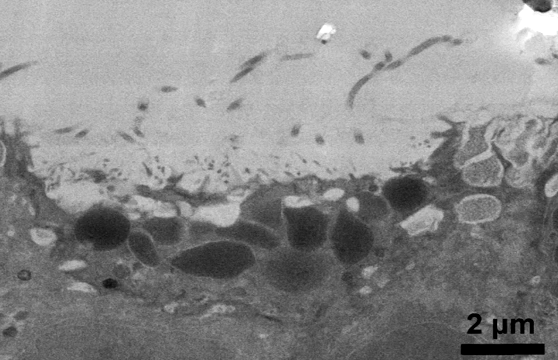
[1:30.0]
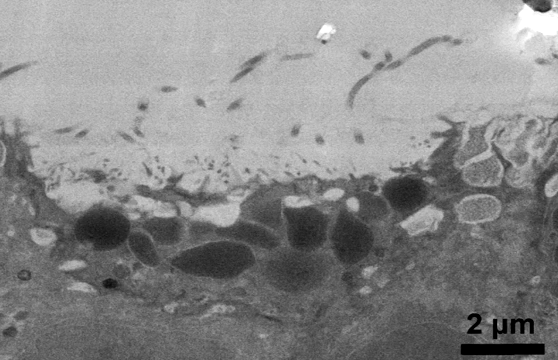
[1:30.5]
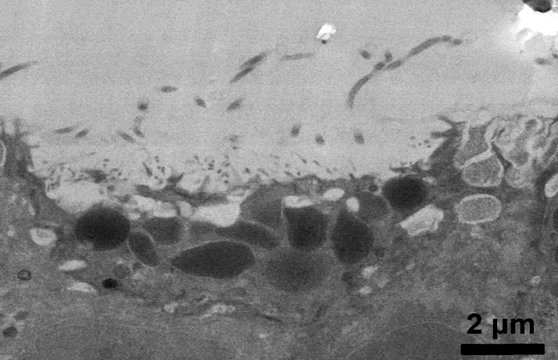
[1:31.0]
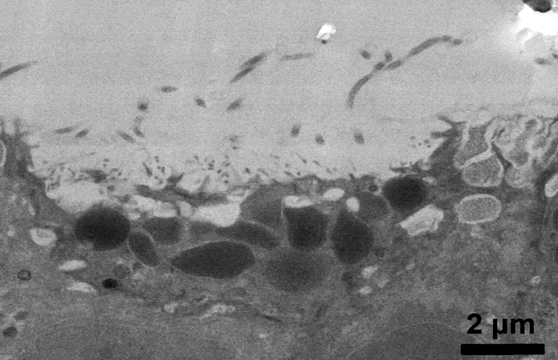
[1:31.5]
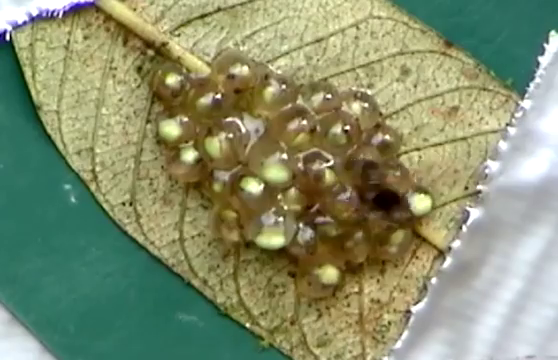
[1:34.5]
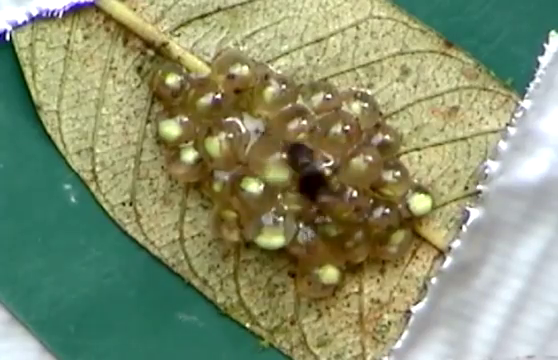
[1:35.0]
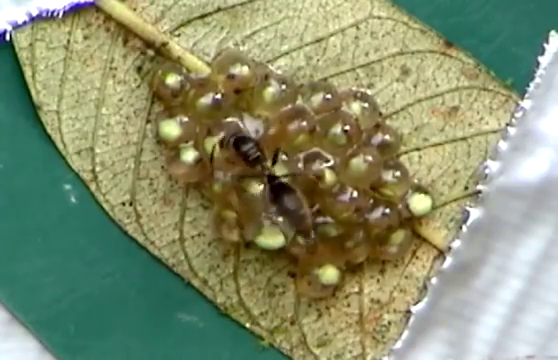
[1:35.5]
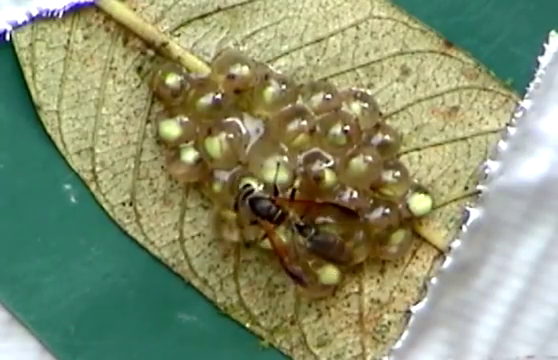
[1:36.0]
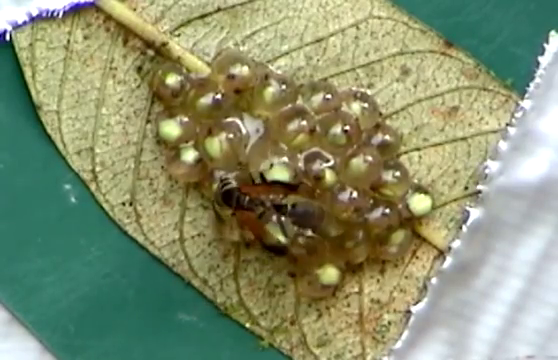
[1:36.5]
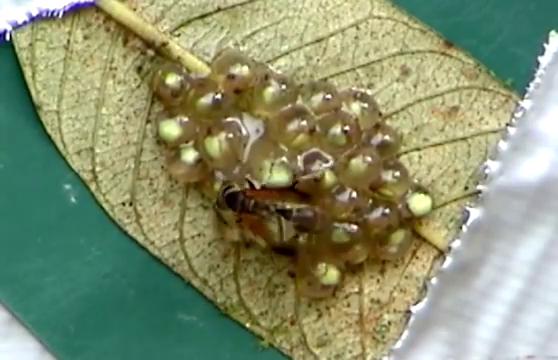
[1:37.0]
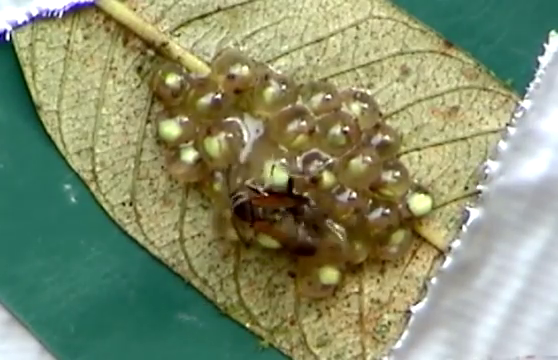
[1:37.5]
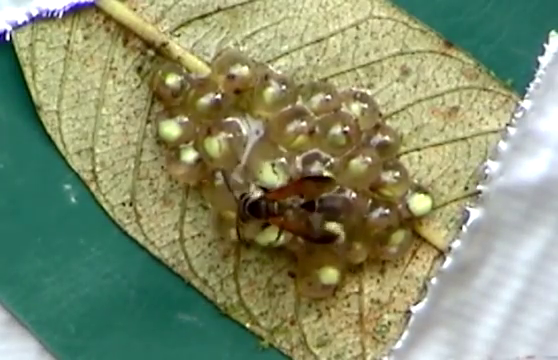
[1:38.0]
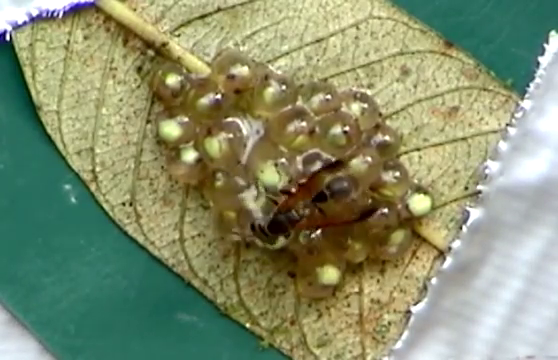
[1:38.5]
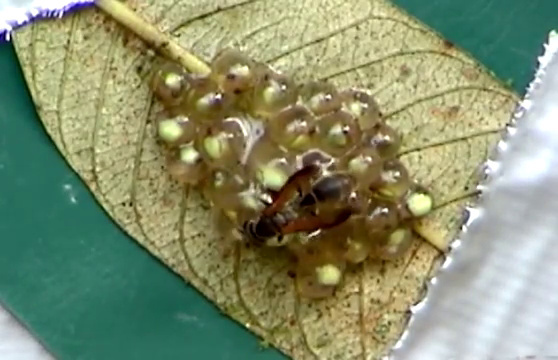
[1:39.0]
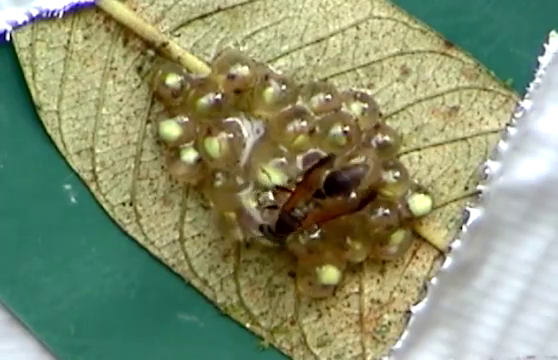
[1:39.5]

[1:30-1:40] An image looks like something viewed through the lenses of a microscope: a grayscale view of some sort of organism with lots of blotches in circular form. Some blotches are darker gray, some medium gray and some lighter gray, with most of the lighter masses in the upper part of the screen. Next, what looks like a collection of embryo eggs appears on a pale greenish gray leaf. What looks like a wasp perches on the embryos and then begins to feed on them.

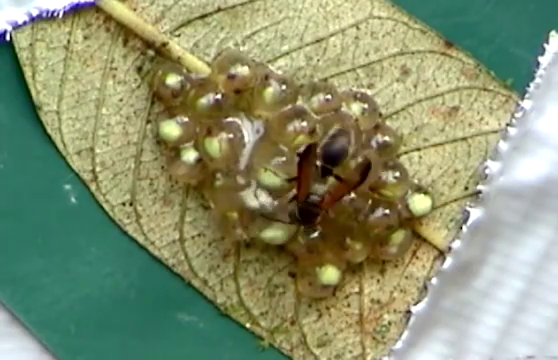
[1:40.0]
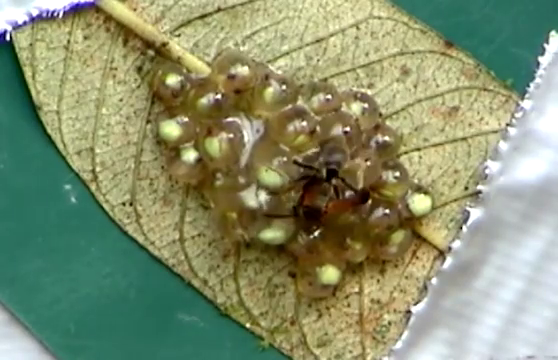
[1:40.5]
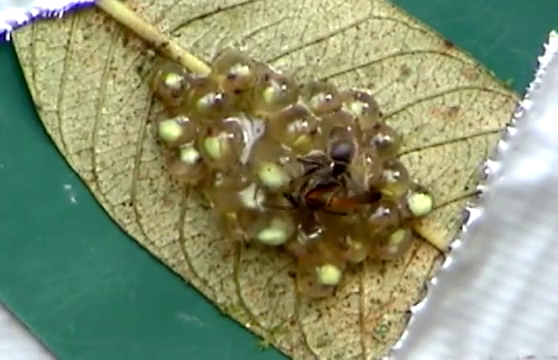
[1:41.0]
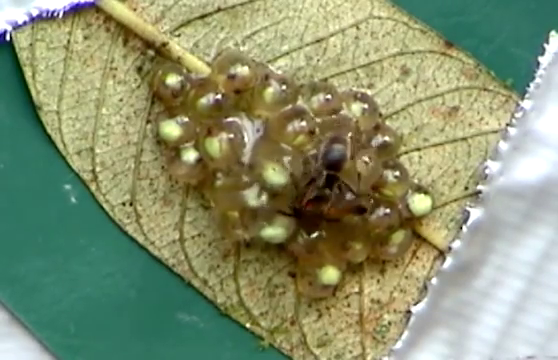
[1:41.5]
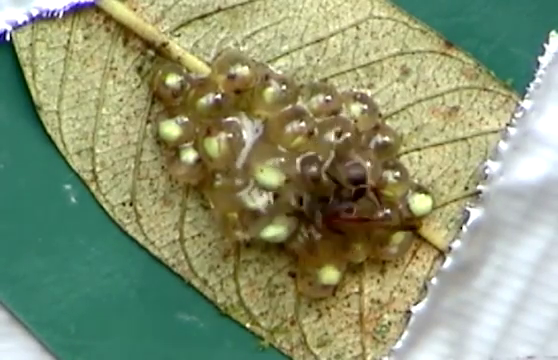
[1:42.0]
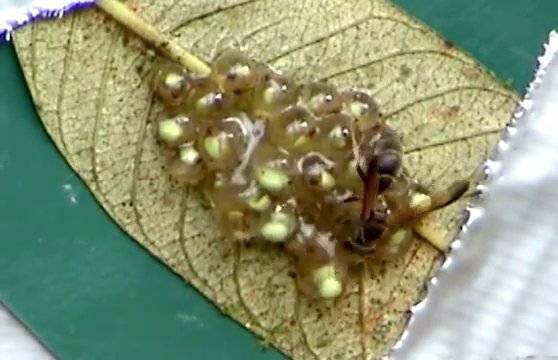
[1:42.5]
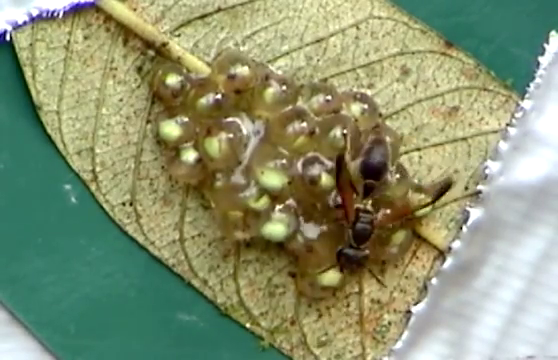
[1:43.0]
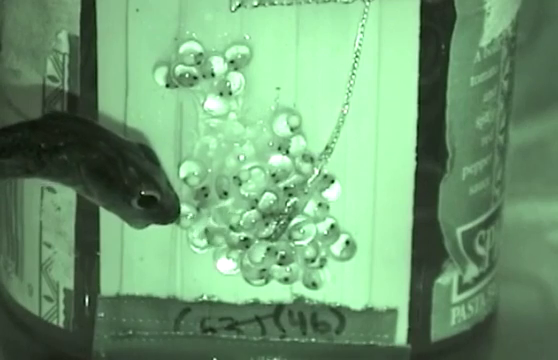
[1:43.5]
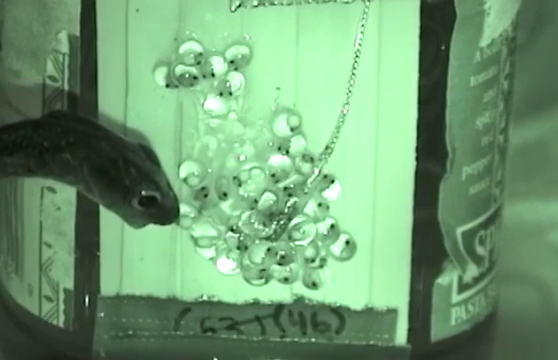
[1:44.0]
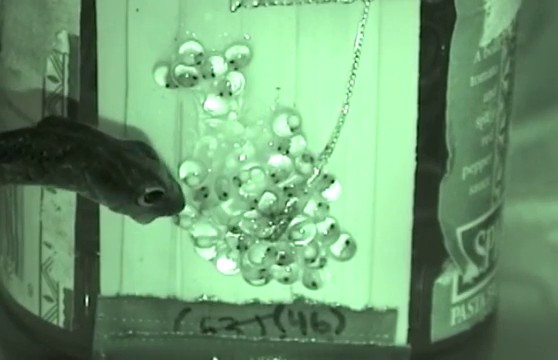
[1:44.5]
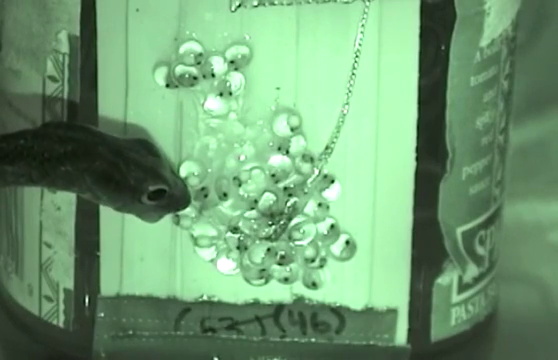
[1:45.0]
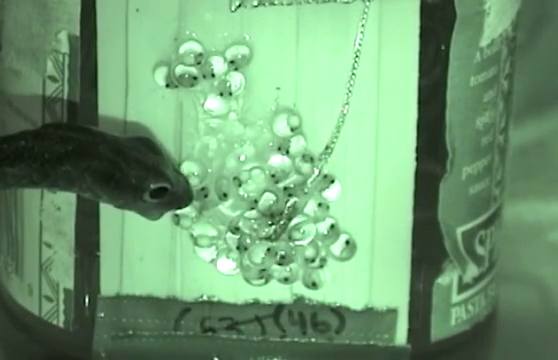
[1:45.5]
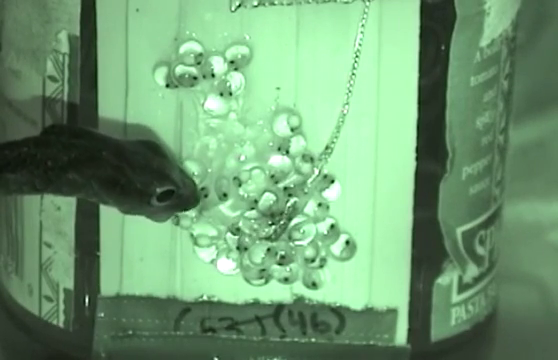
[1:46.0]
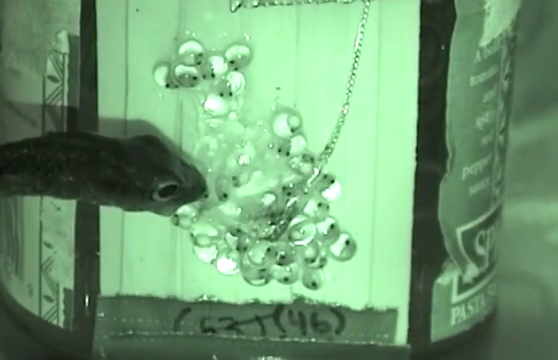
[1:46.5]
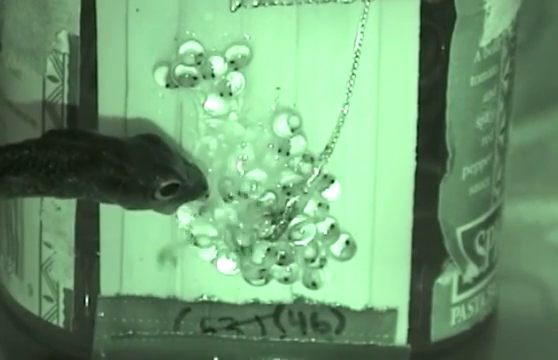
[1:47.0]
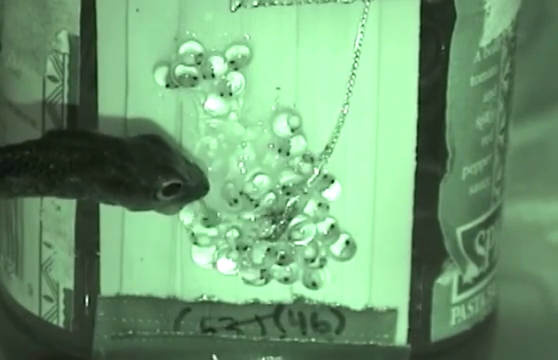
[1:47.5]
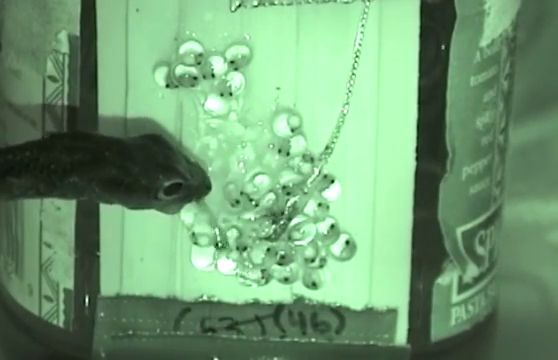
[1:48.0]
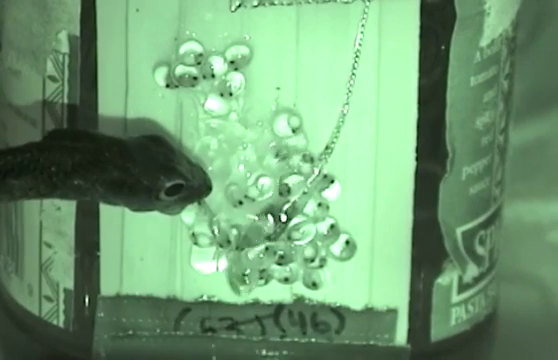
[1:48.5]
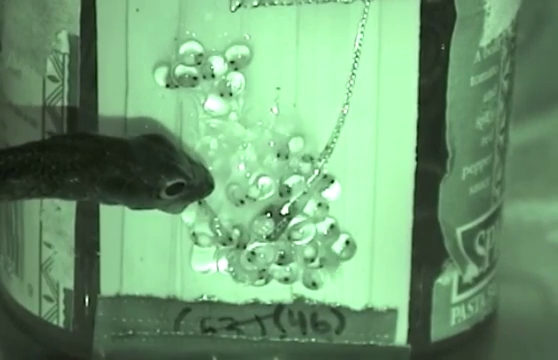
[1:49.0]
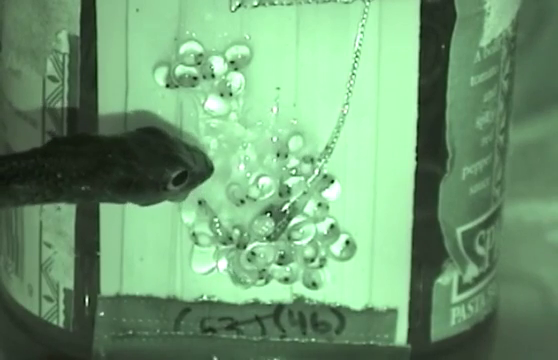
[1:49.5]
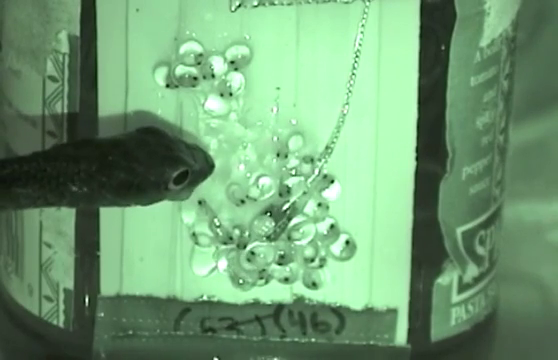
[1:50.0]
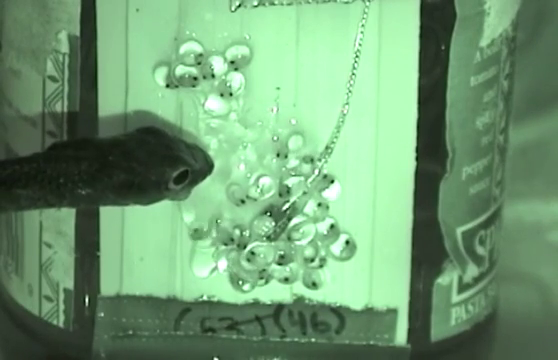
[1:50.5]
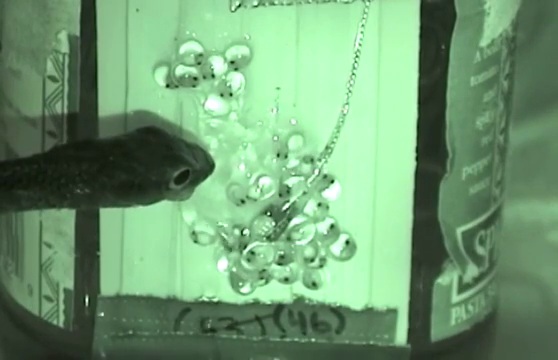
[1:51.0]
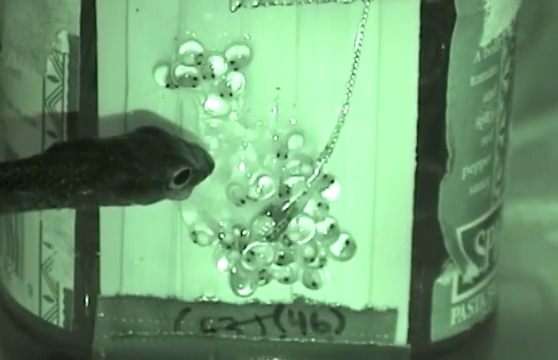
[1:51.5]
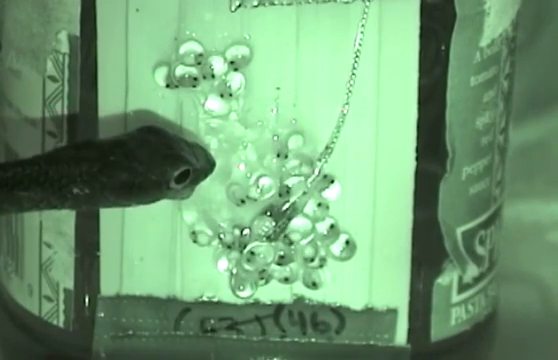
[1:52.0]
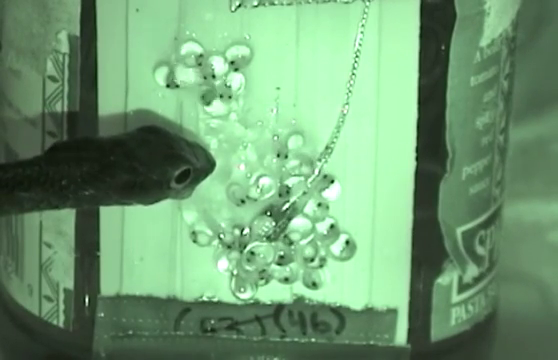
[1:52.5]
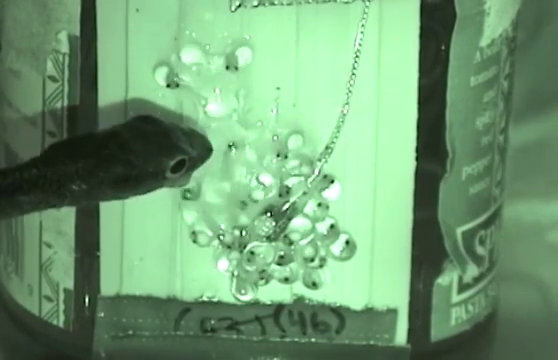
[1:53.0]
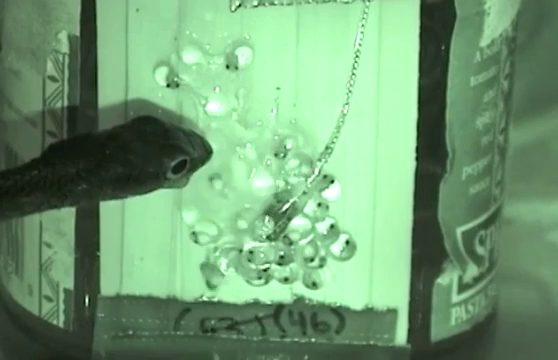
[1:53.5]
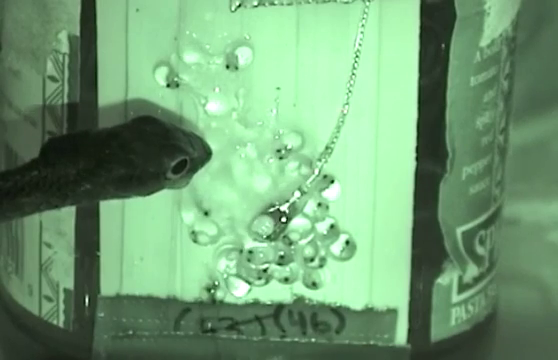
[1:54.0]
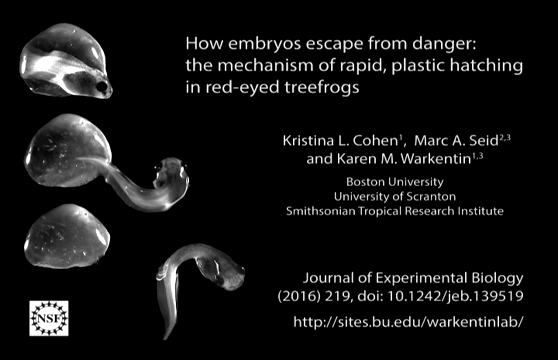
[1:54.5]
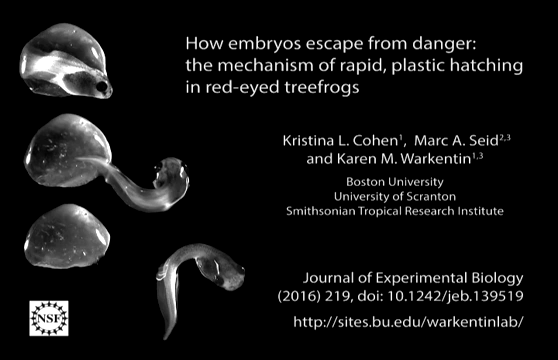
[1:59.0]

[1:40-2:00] A close-up view shows a dried-up leaf placed on a green background, with a collection of embryo eggs clumped together on it. A wasp is on the embryo eggs and looks like it is feeding on them. Next, a black and white video shows more embryos, and the head of a fish emerges from the left side; the fish looks like it is feeding on the embryos. The video transitions to a black and white screen. On the left side is an image of three different embryo stages: at the top, the embryos turning the eggshell; next, the embryo emerging; and in the third one below, the embryo escaped and swimming. Written on the right side is "how embryos escape from danger, the mechanism of rapid plastic hatching in red-eyed tree frogs". Below that are the names of the researchers and their schools, listed as Boston University, University of Scranton, and Smithsonian Tropical Research Institute.